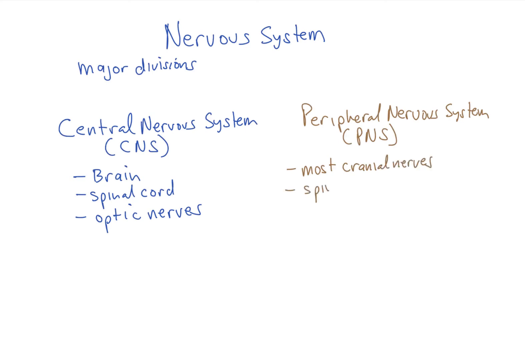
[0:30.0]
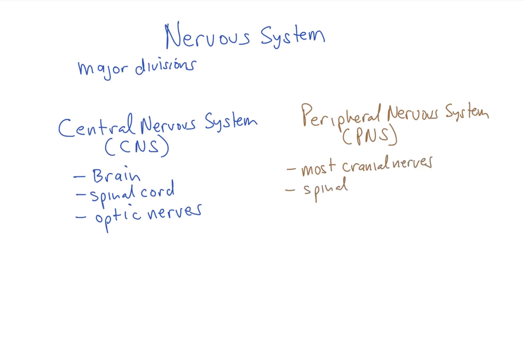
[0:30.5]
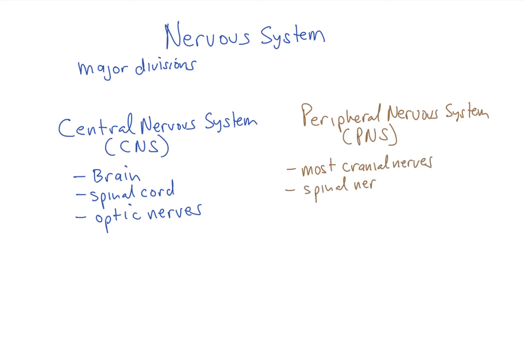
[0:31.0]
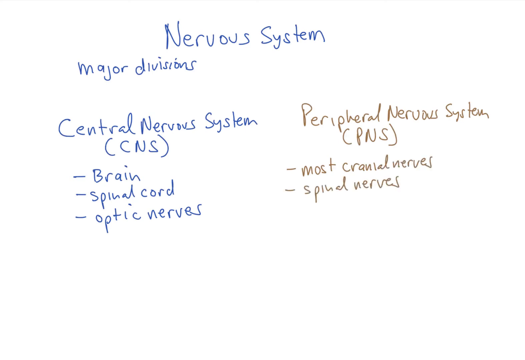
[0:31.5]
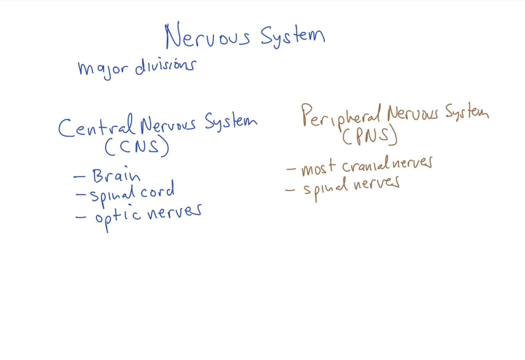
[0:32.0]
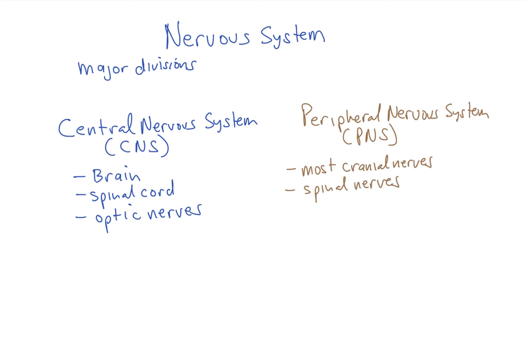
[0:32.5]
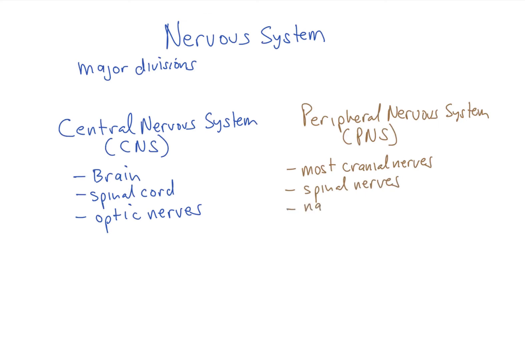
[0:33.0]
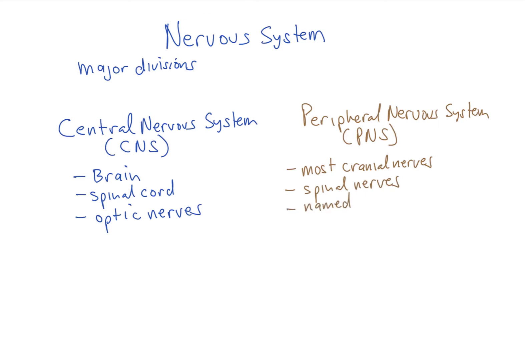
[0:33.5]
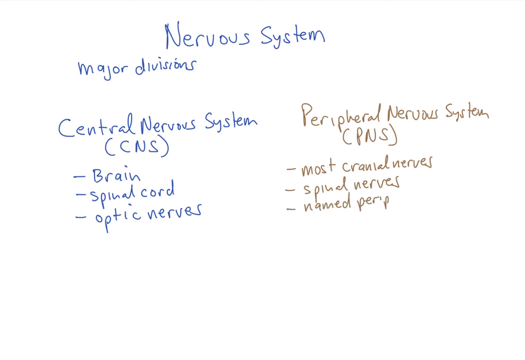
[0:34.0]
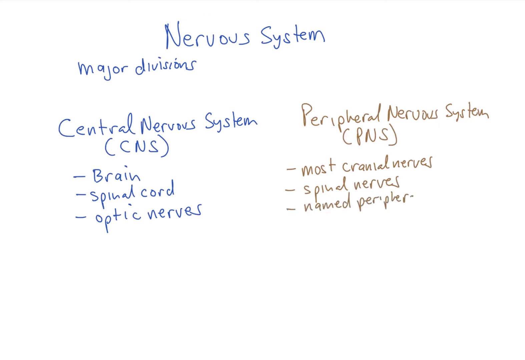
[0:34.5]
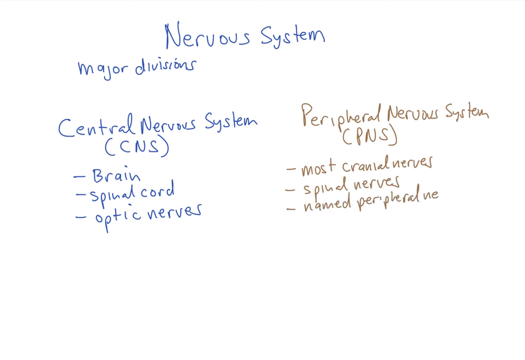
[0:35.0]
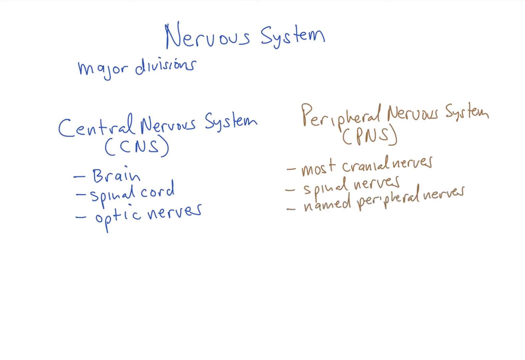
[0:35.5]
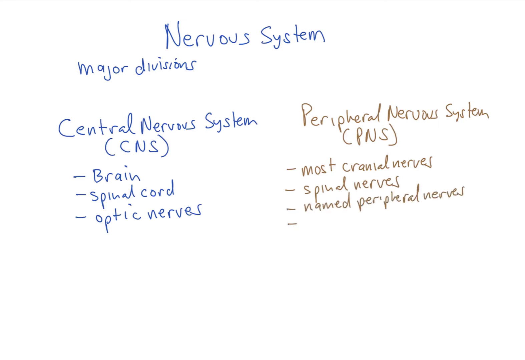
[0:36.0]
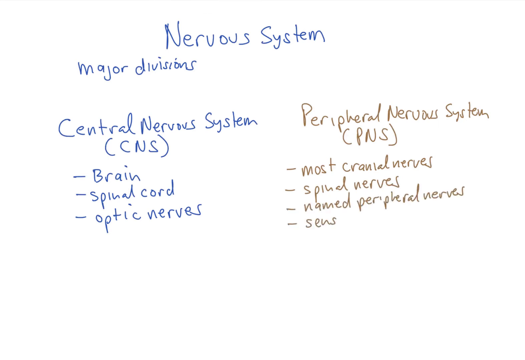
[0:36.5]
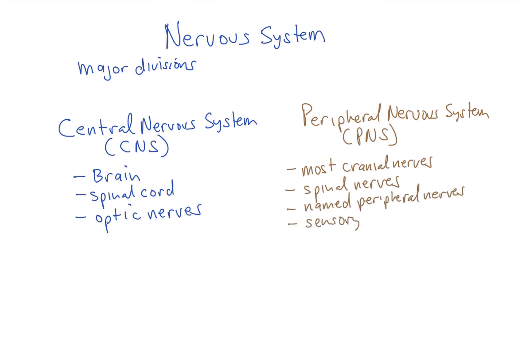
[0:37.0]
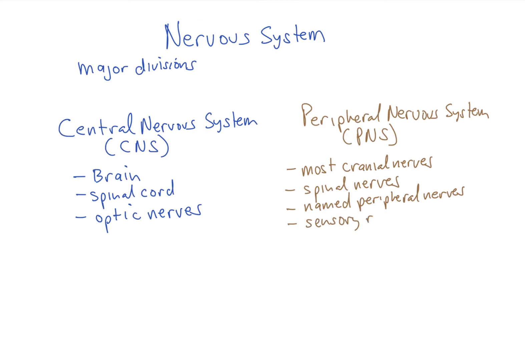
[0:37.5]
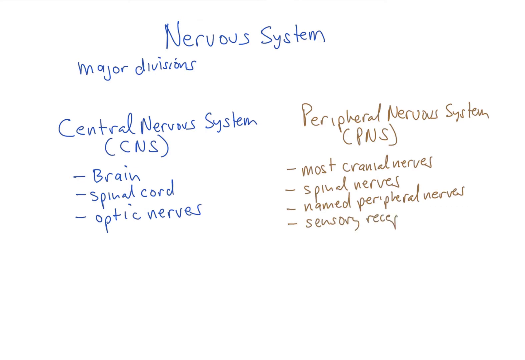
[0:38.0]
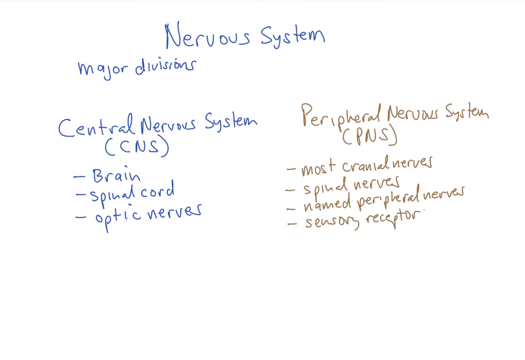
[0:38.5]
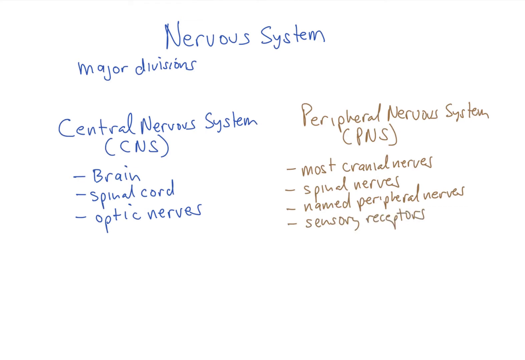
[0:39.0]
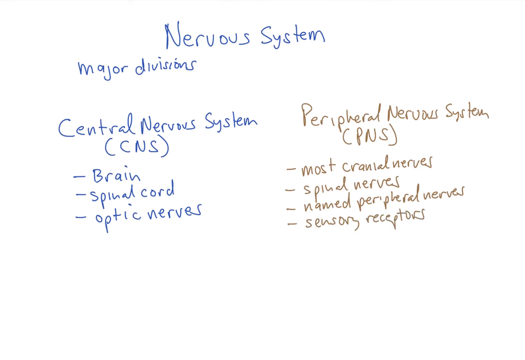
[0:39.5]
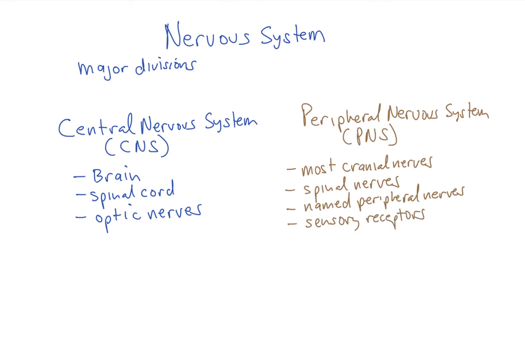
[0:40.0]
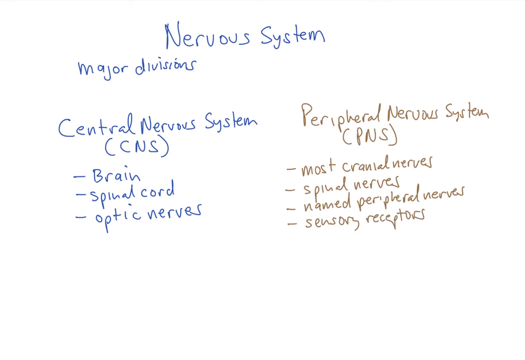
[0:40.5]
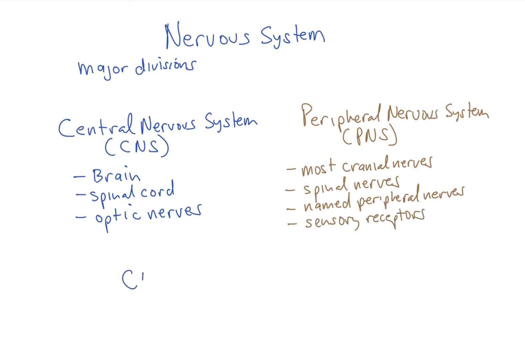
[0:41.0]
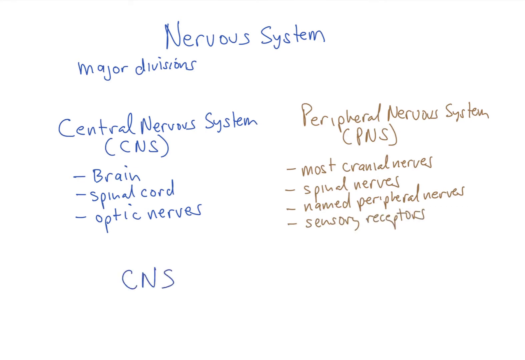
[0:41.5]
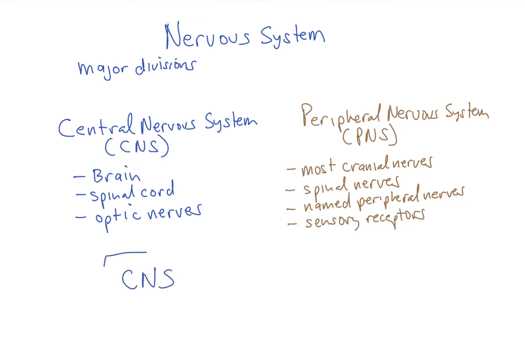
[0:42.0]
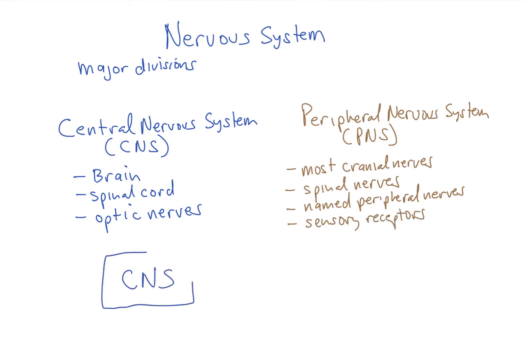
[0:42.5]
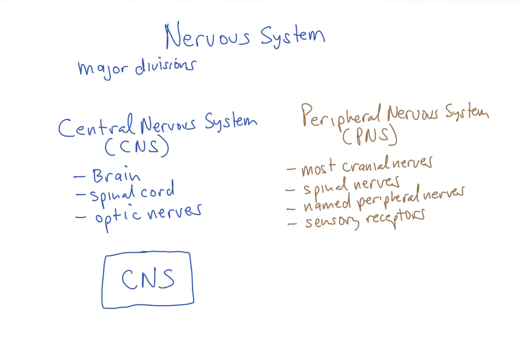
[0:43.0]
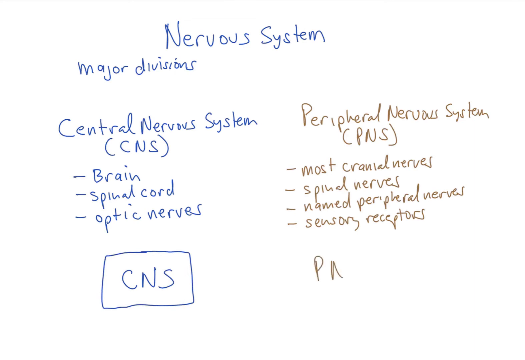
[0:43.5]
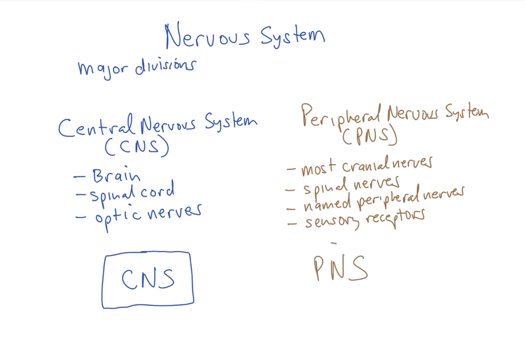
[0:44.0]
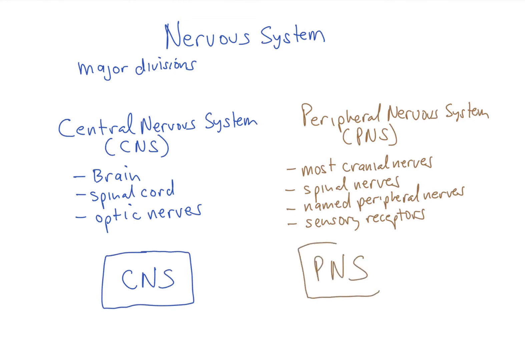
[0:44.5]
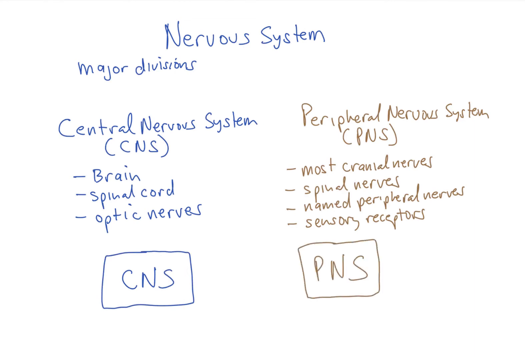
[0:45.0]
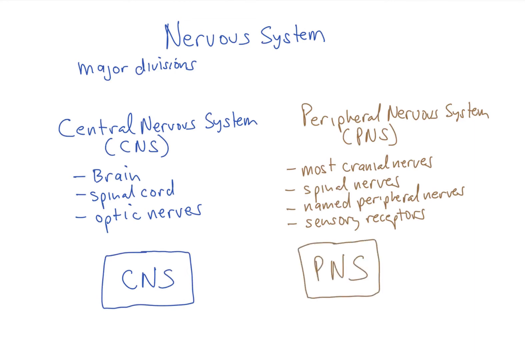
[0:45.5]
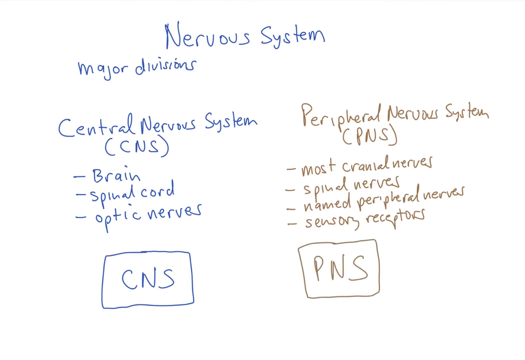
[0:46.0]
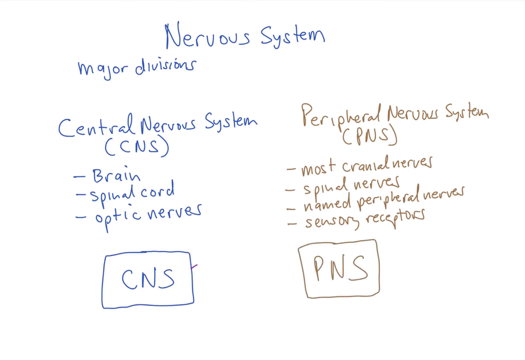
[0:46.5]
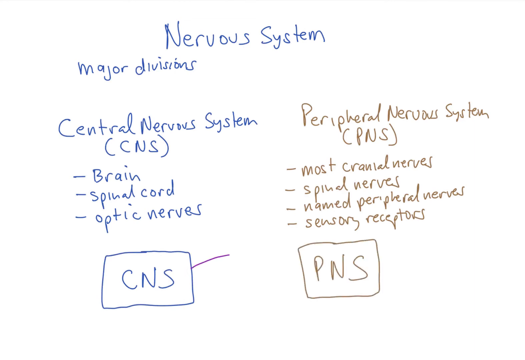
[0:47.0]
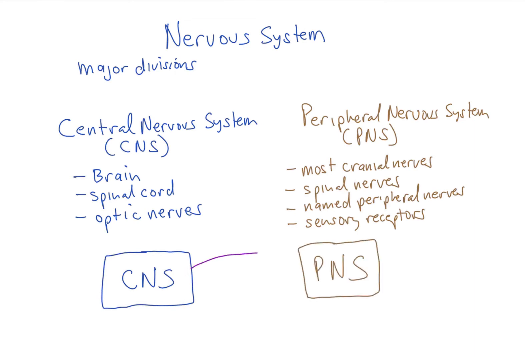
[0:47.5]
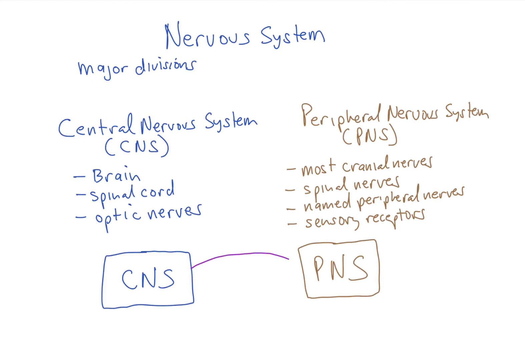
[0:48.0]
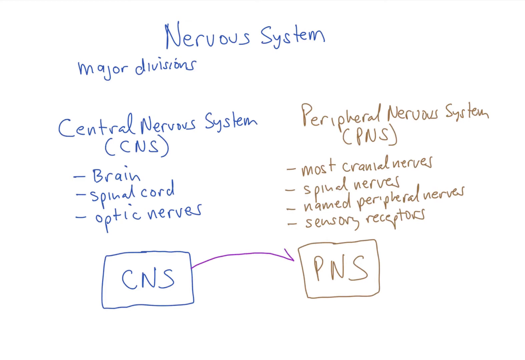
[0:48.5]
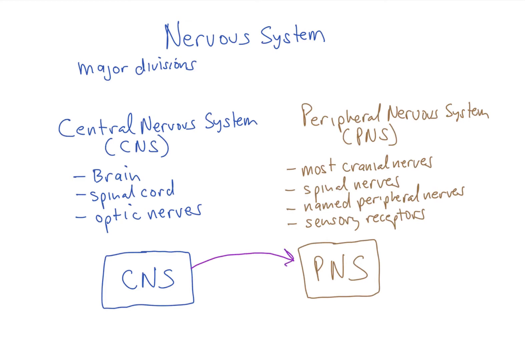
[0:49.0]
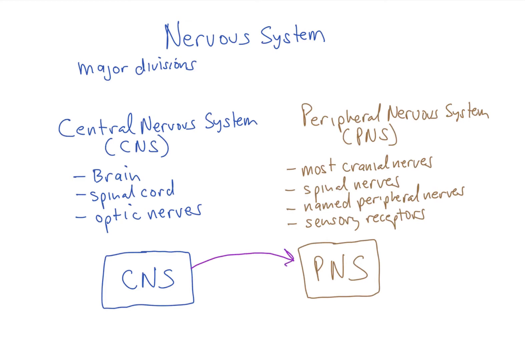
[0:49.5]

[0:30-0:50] More bullet points are added under "peripheral nervous system (PNS)" in a dark brown or dark grey font. The bullet points read "most cranial nerves", "spinal nerves", "named peripheral nerves" and "sensory receptors". Underneath, at the bottom of the screen, two boxes are drawn, one labeled "CNS" and the other labeled "PNS". A line is drawn from the CNS box with an arrow pointing towards the PNS box. The background is white, like a whiteboard, and only two text colours are used: blue, and dark brown or dark grey for the peripheral nervous system. The screen is divided into two halves, the left half about the CNS and the right half about the PNS.